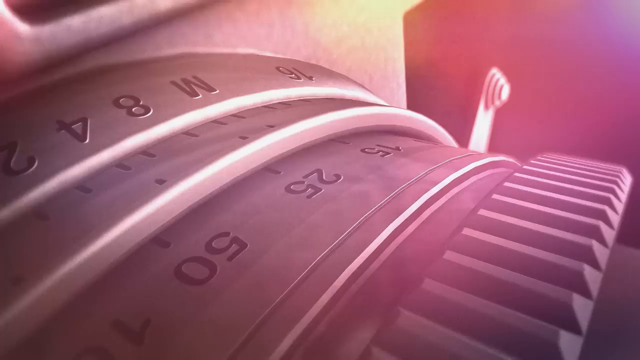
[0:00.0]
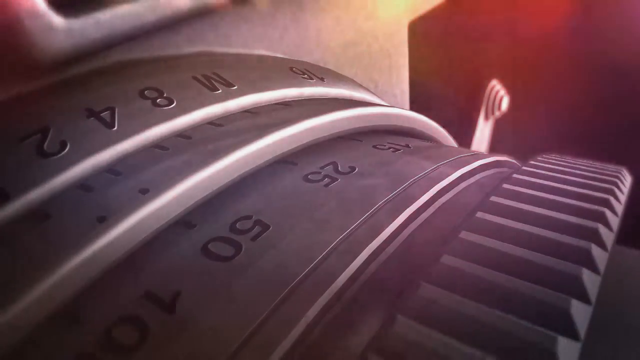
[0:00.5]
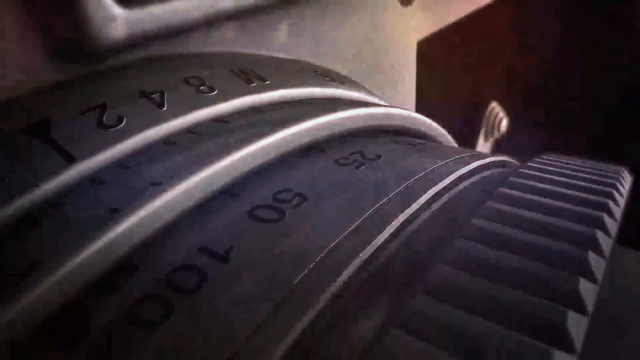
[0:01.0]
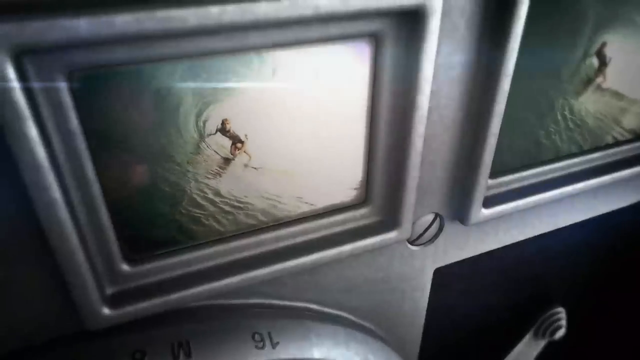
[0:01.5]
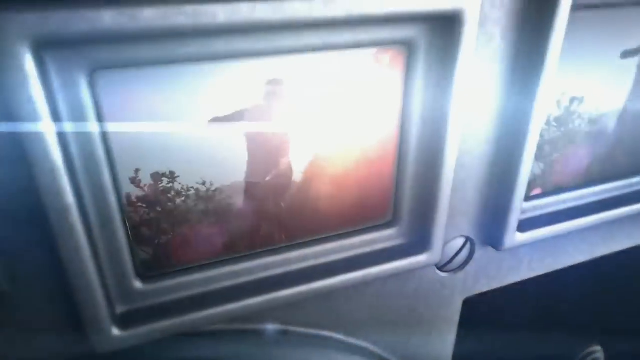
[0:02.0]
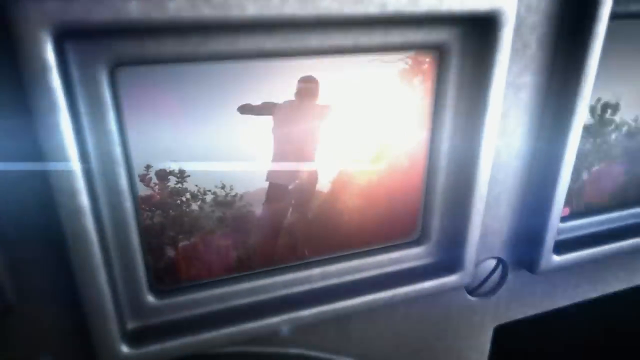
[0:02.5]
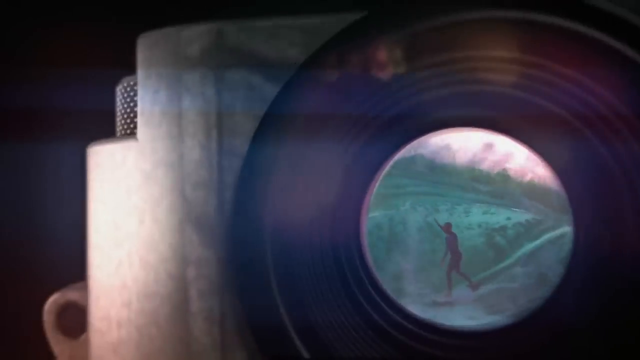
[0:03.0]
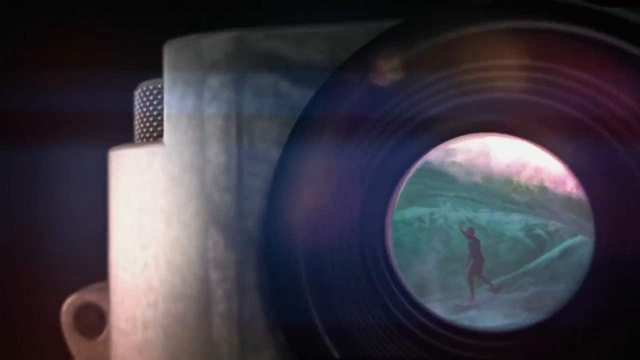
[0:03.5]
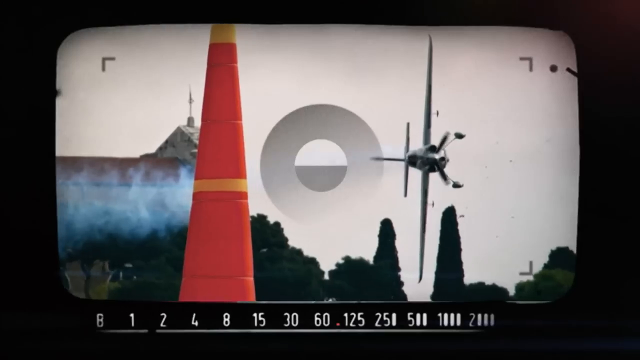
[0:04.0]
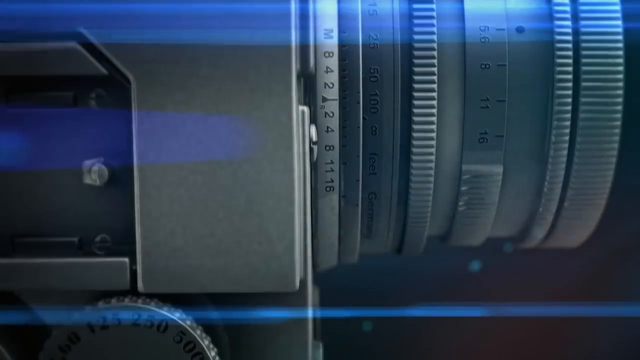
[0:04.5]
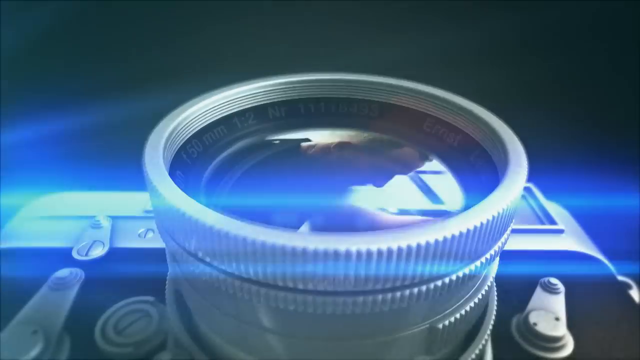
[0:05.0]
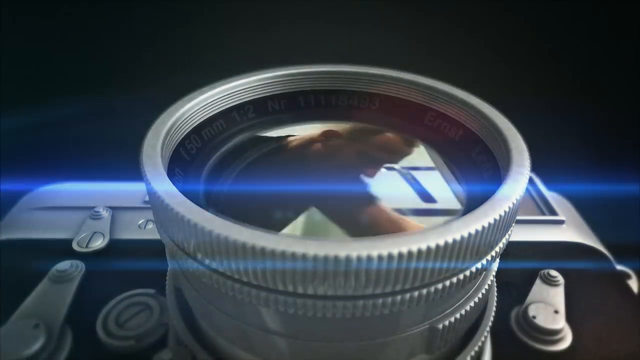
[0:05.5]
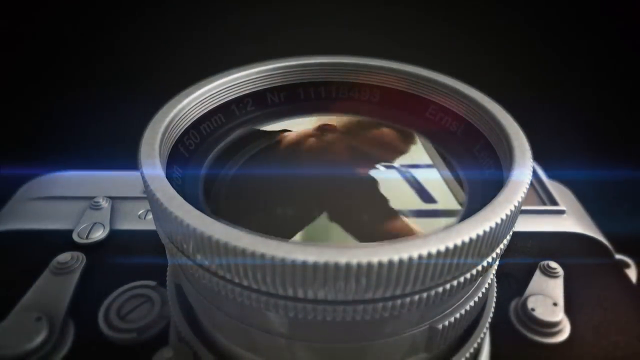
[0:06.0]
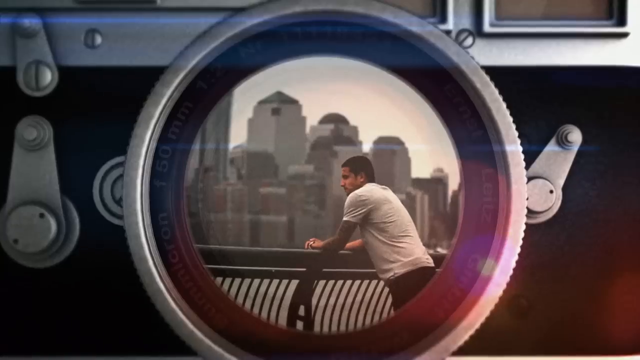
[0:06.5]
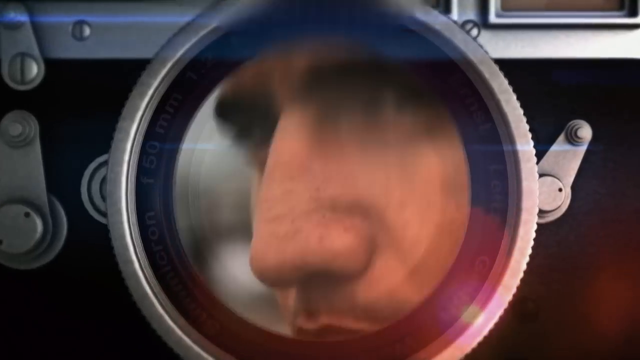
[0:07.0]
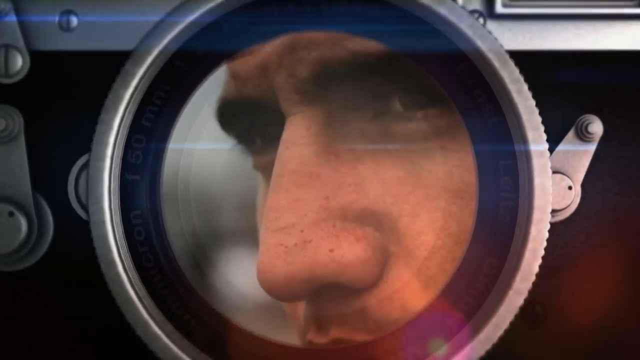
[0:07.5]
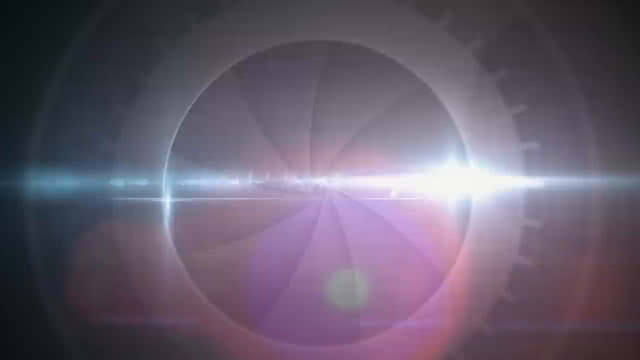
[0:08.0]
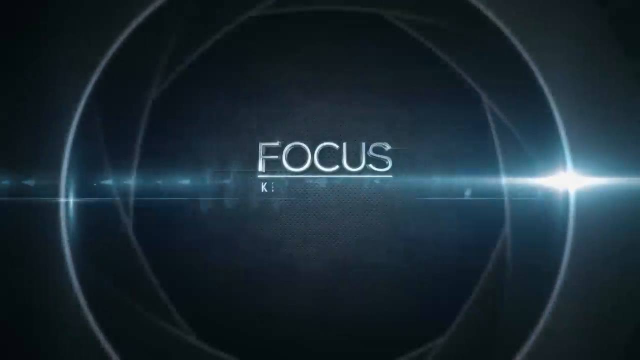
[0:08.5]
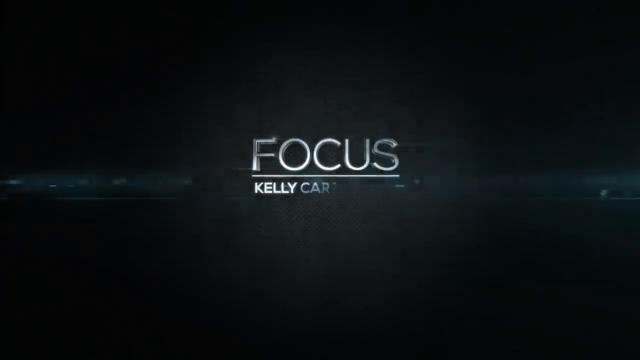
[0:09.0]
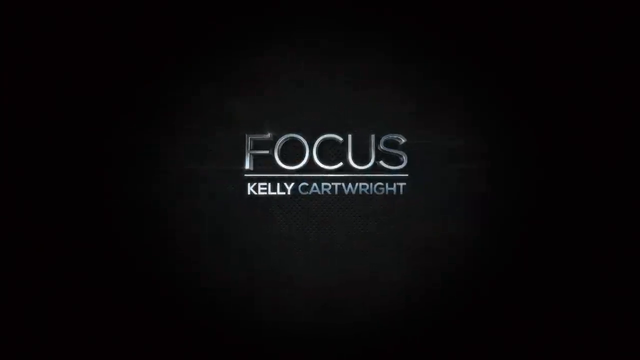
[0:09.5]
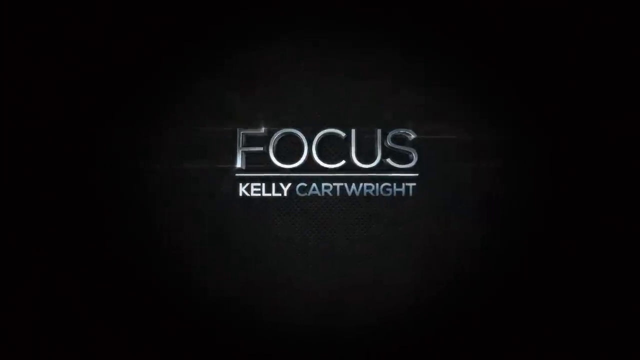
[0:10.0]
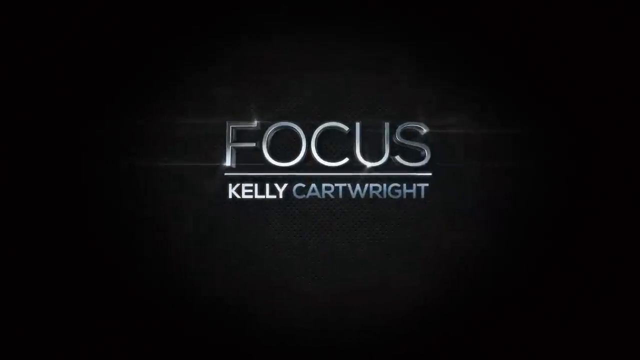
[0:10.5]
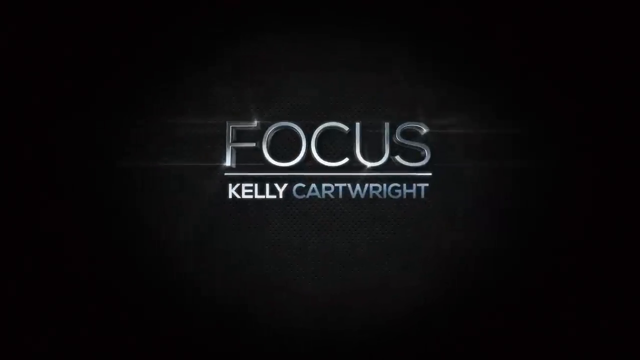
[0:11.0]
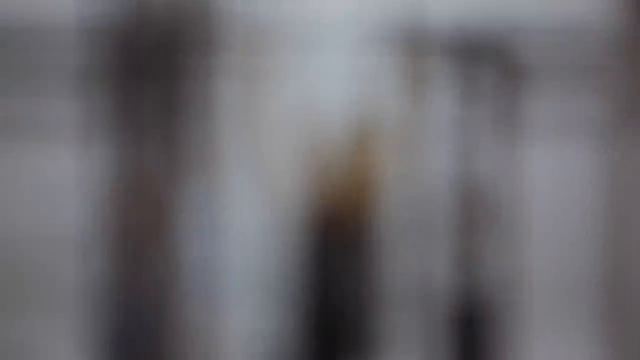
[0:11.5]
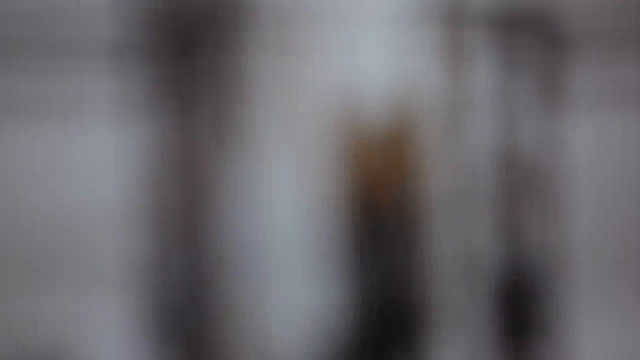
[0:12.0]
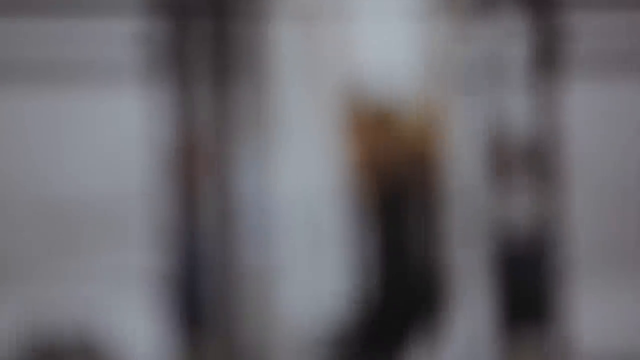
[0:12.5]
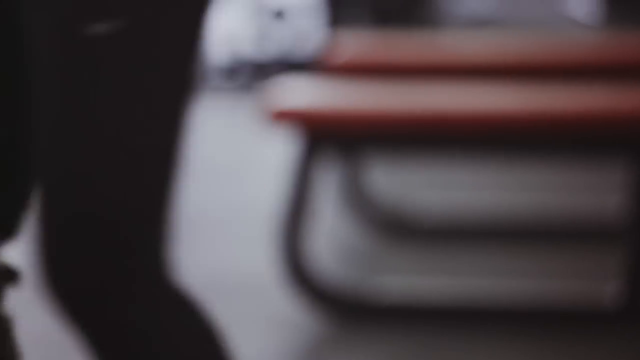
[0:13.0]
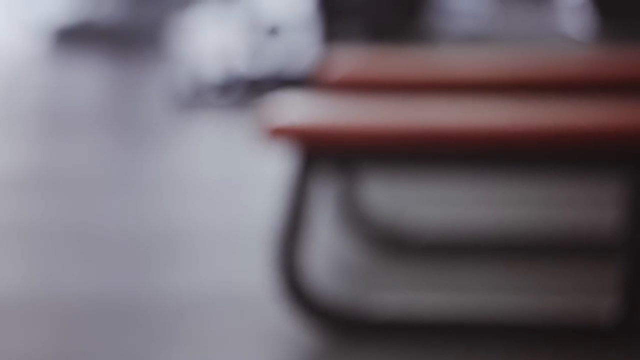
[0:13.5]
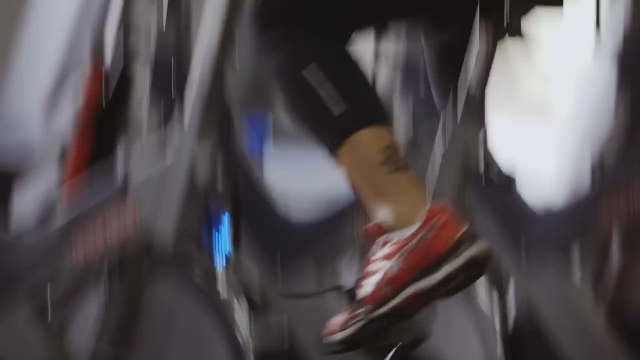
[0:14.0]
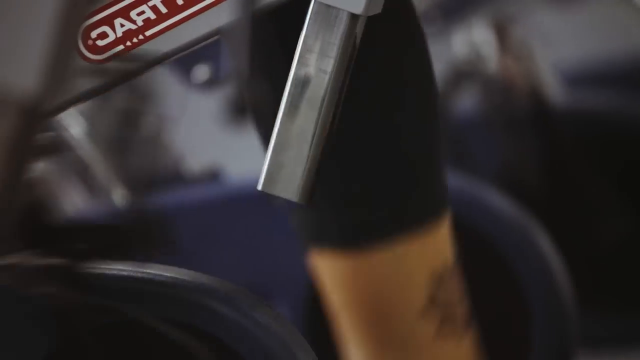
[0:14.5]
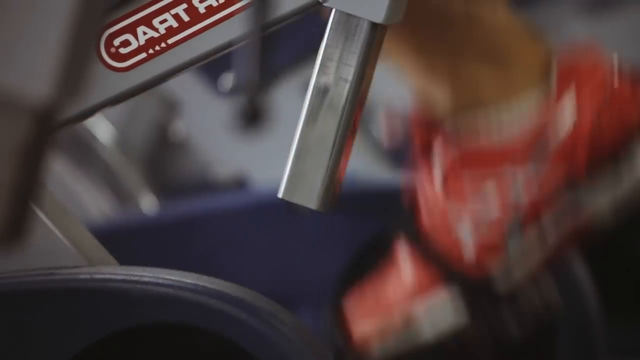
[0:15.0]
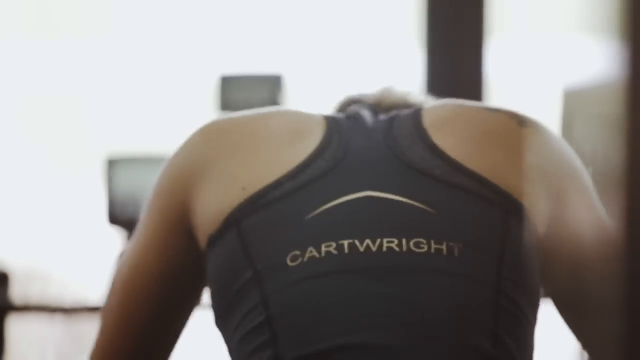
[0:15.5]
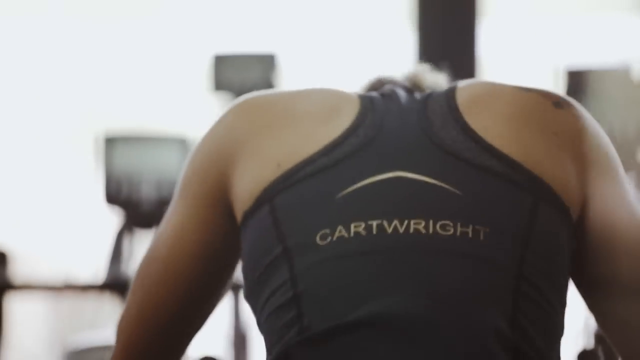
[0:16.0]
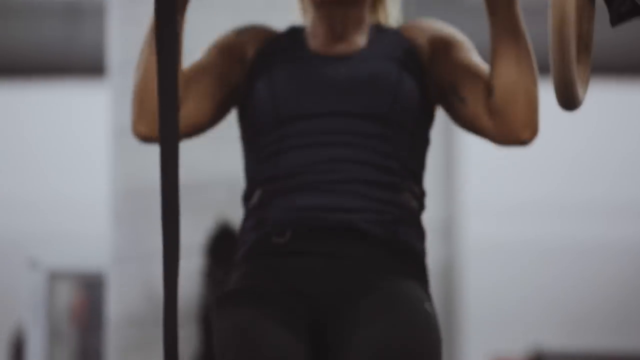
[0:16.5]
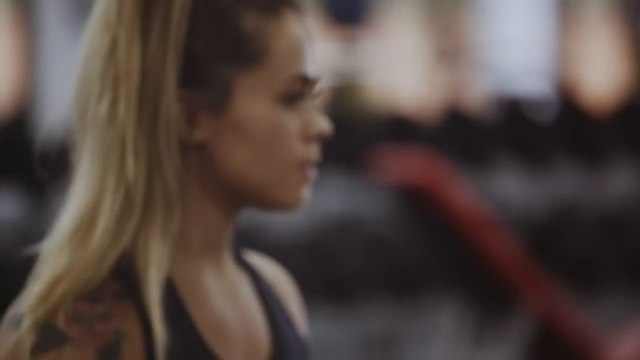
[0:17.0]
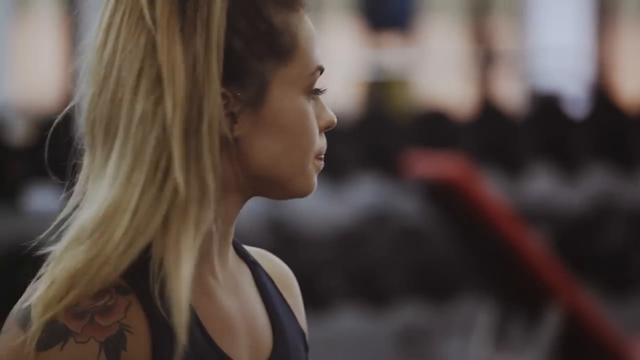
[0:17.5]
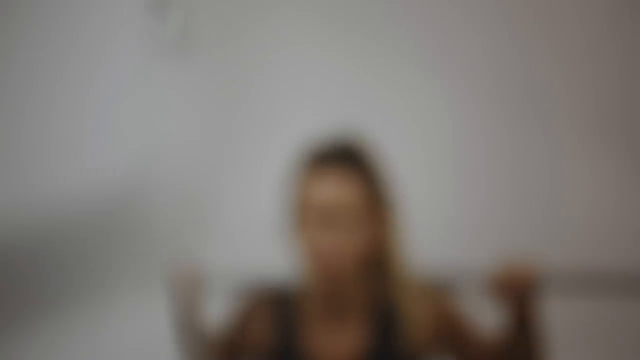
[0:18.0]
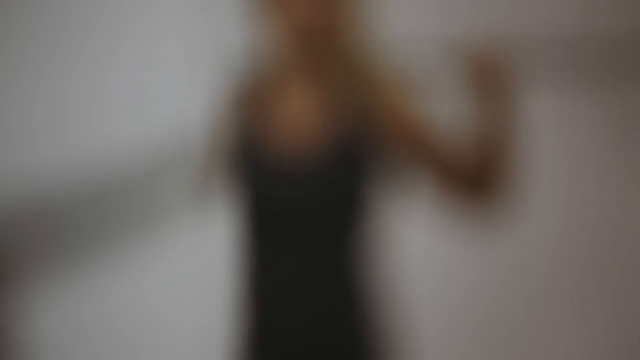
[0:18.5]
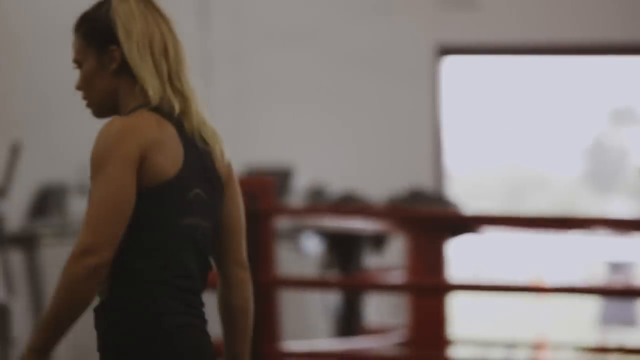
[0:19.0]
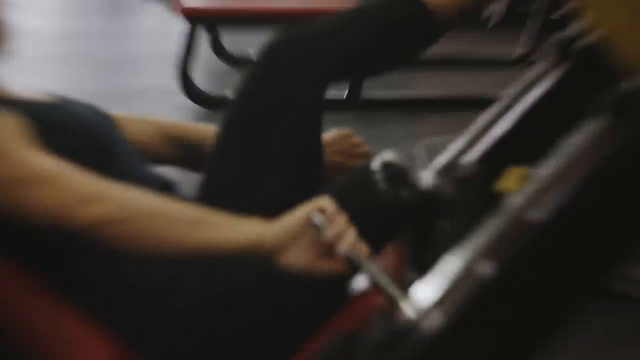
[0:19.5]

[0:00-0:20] The video opens with an extended intro showing different views of a camera: a camera lens from the side and then from the front, images that look as if they are seen through the lens of a camera, and videos that look as if they are imposed over a camera lens. The intro disappears and a graphic reads "Focus, Kelly Cartwright." This fades into several shots of a woman working out in a gym. She wears a black top with the name "Cartwright" on the back. She is on a treadmill and a stationary bike, pulls herself up on bars, and a close-up shows her face as she looks around the gym. She lifts weights and is also on exercise equipment.